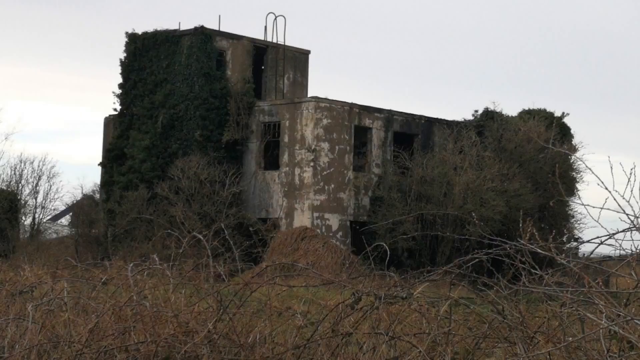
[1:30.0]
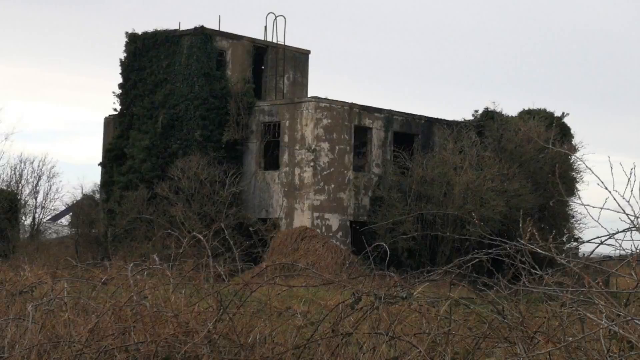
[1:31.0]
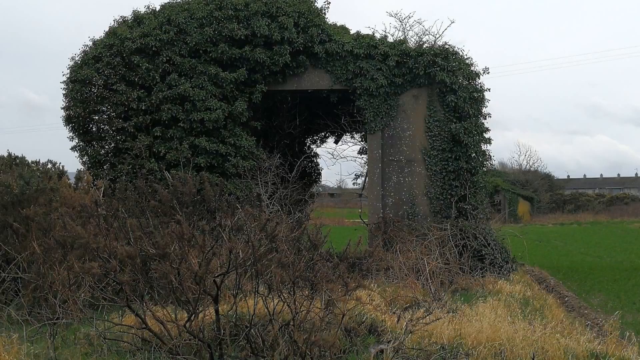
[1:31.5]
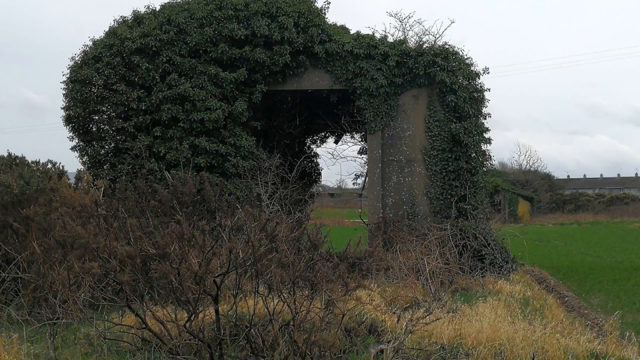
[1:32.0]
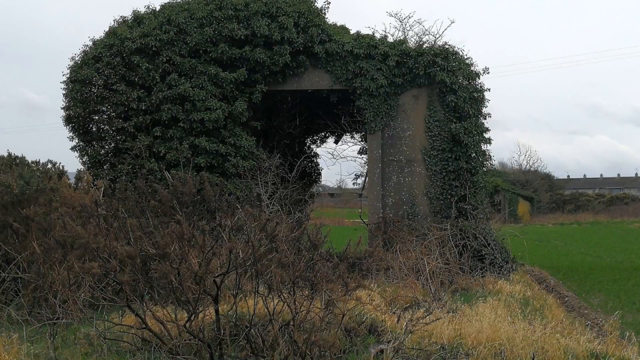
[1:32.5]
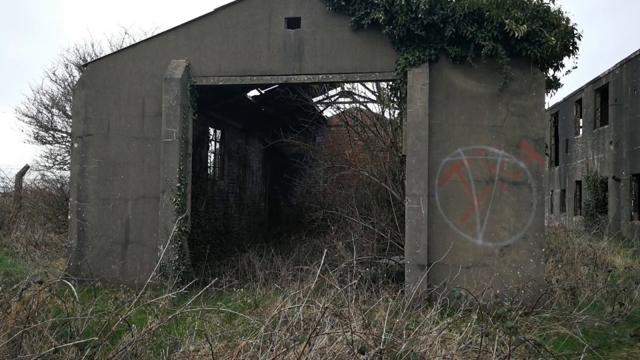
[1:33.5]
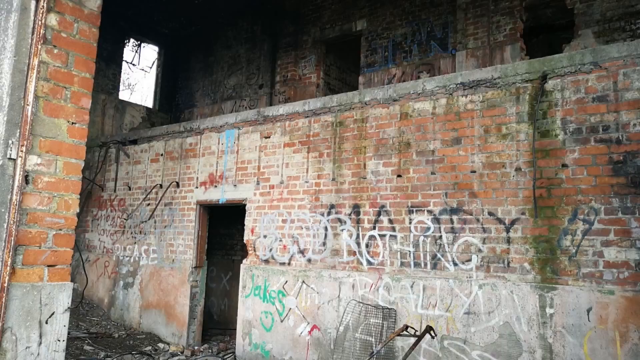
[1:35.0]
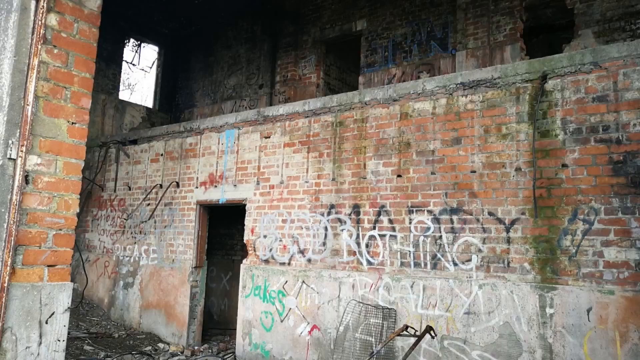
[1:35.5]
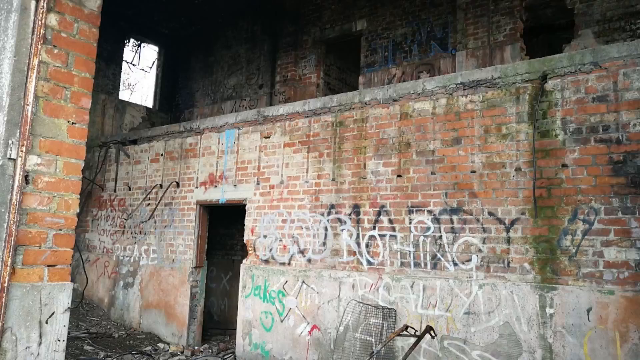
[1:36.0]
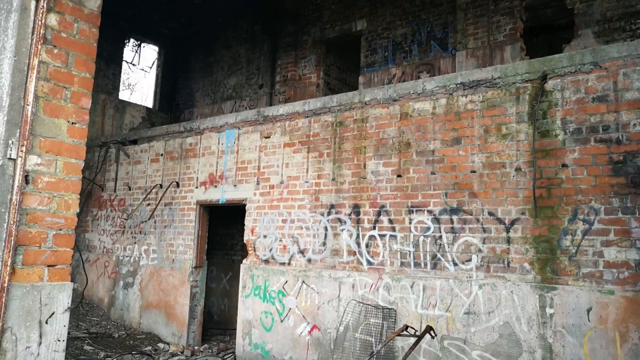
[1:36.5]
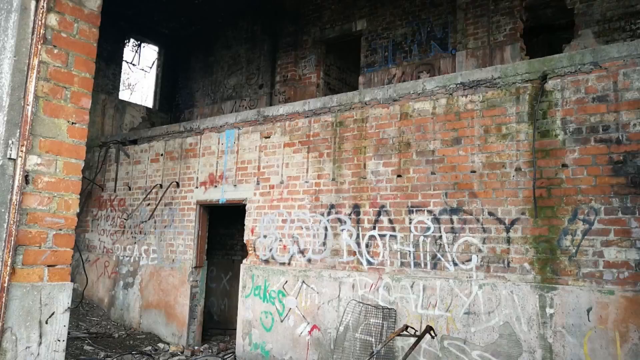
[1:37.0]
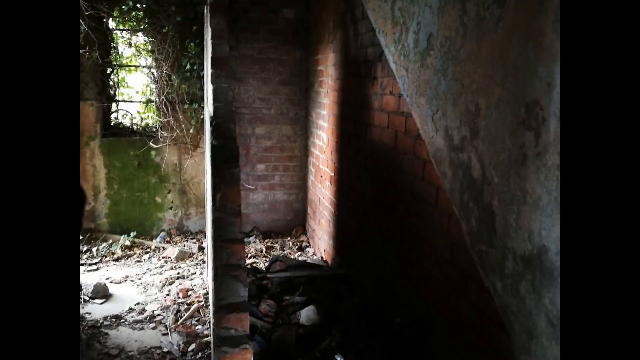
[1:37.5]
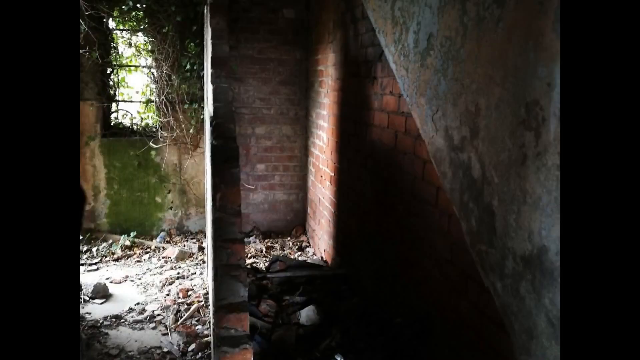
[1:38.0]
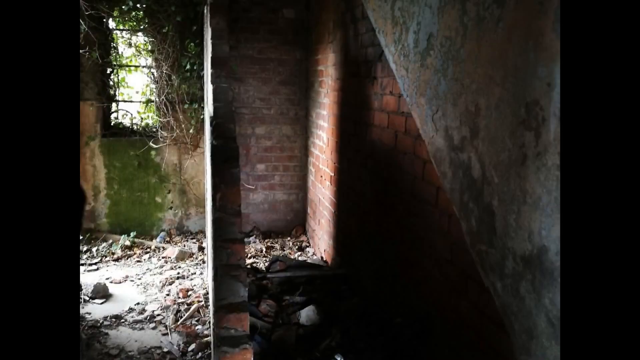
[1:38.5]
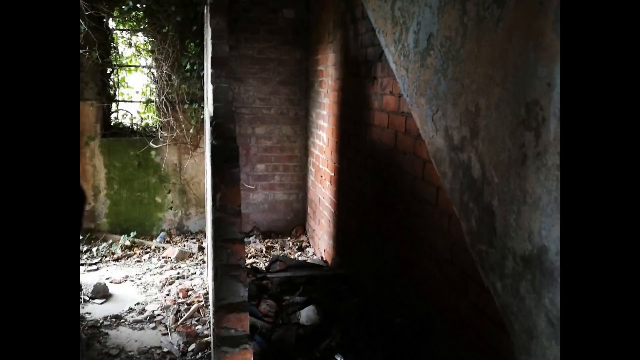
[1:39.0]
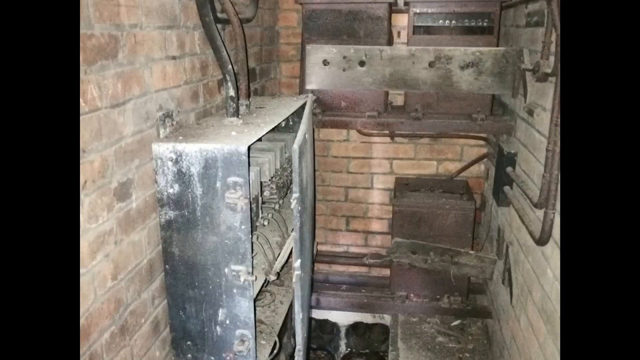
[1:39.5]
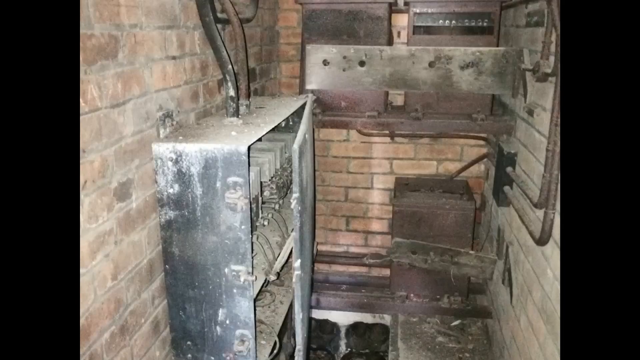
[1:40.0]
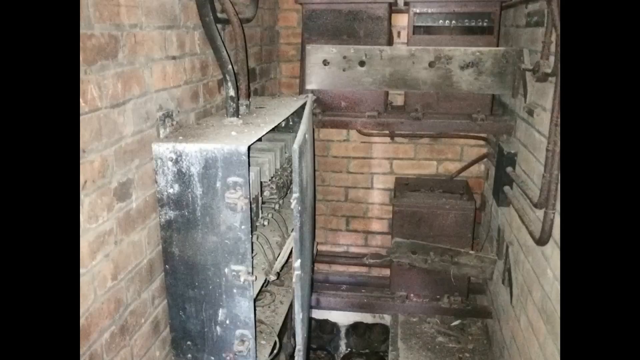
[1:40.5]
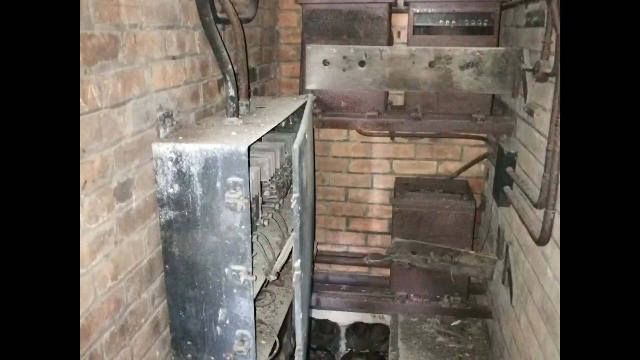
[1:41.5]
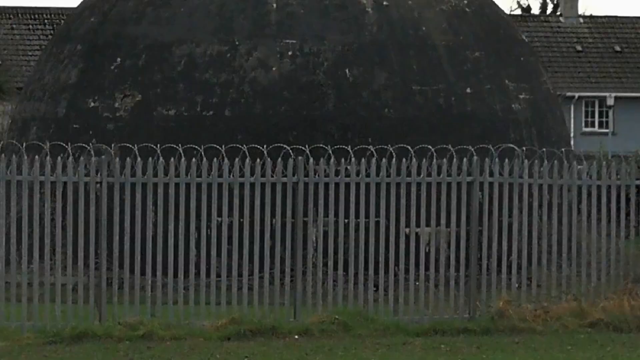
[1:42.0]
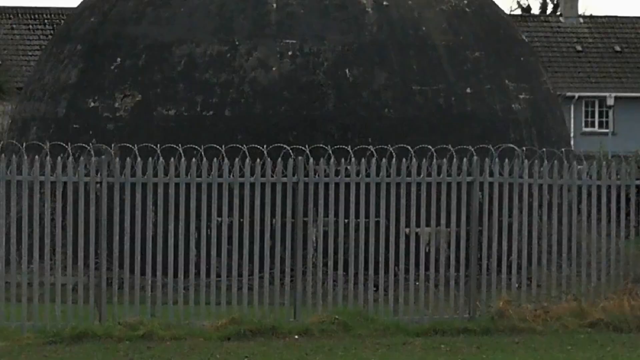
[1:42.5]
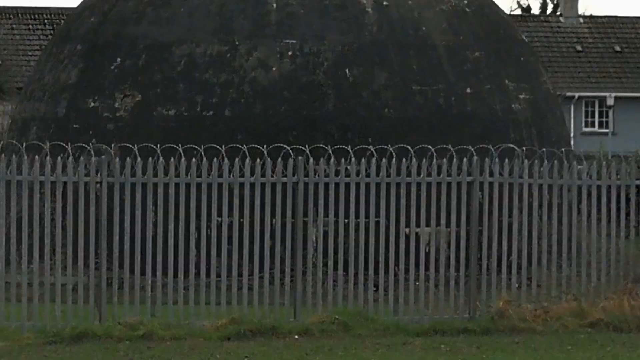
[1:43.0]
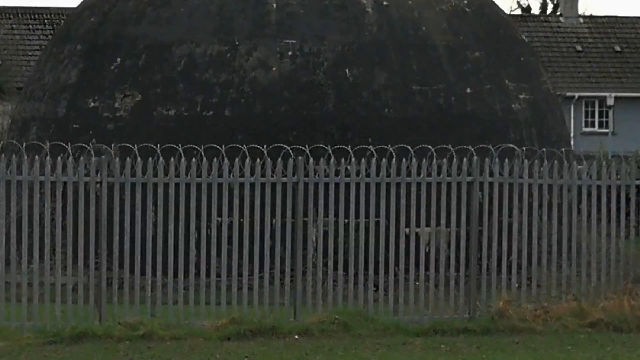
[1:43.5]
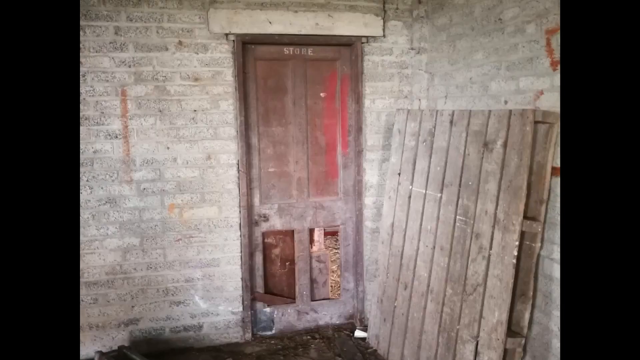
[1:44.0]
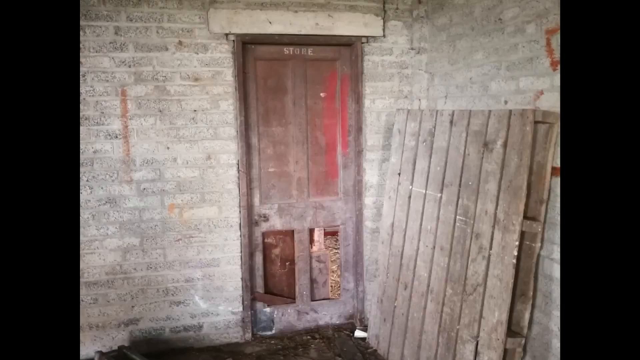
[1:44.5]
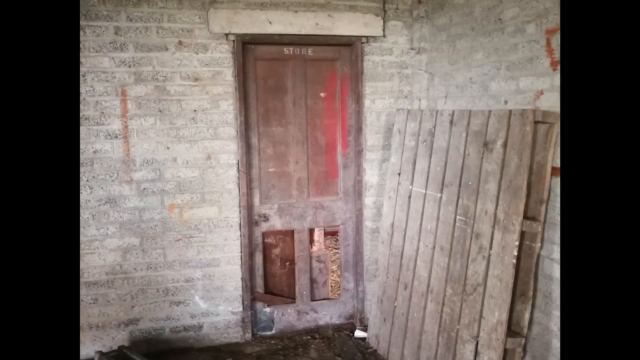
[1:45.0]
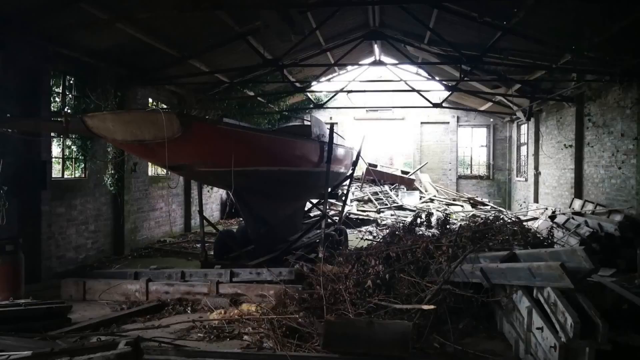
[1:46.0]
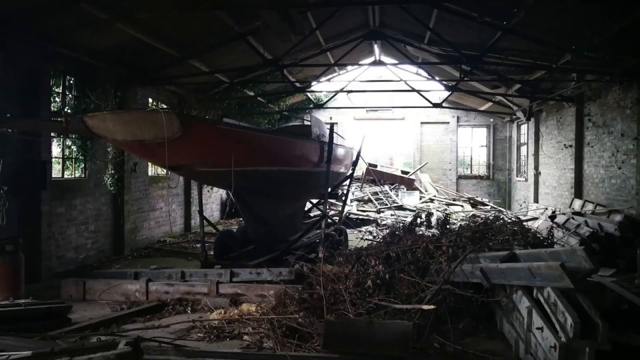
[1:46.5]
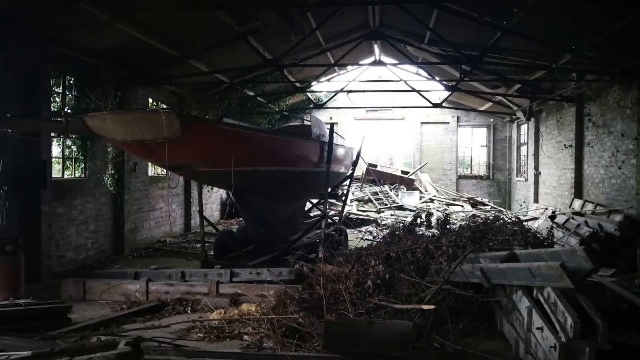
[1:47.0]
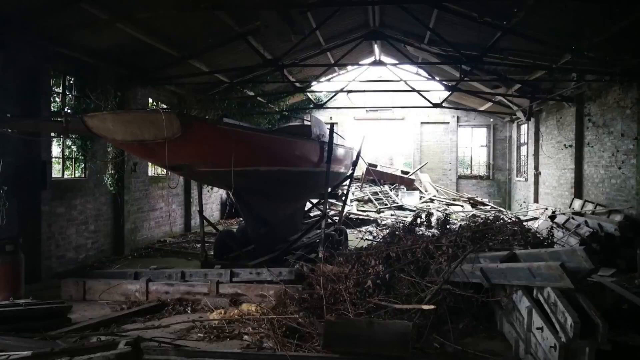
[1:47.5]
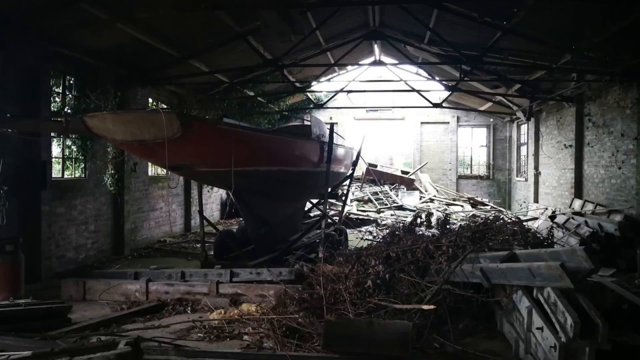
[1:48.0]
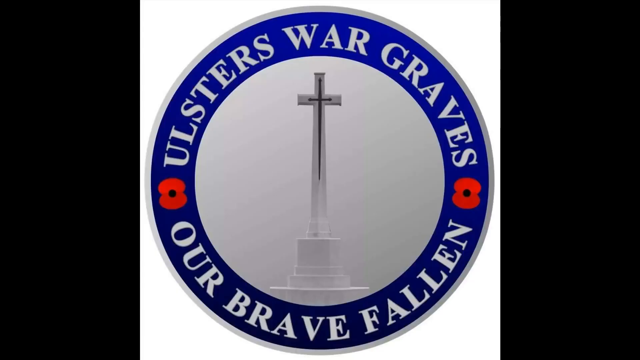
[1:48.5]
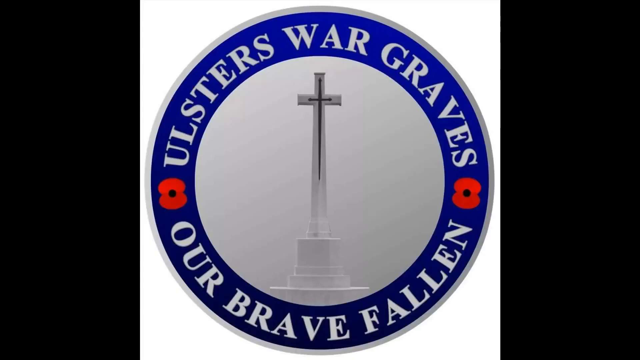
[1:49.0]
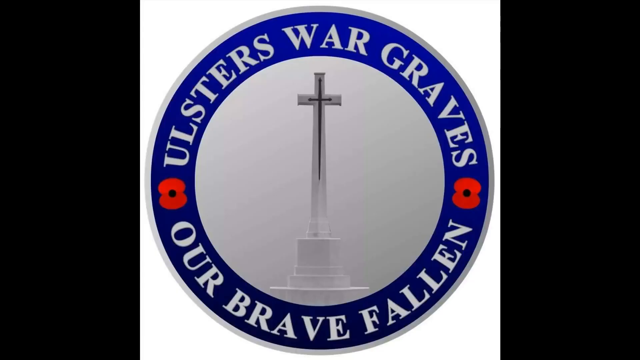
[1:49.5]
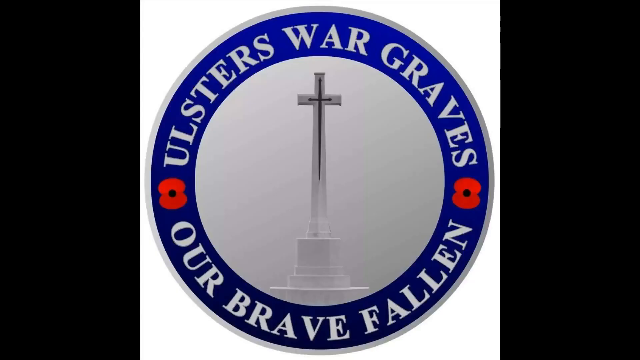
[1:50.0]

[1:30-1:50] An old abandoned brick structure is shown. Its outside has been overtaken by vegetation, thicket, and brush; inside, it looks like someone took most of the things out and left it. The bricks are deteriorating from the weather. It is in the countryside, with no other structures visible nearby. Inside it is grey cement and red brick, with graffiti written on the brick walls in some places. Inside there is moss and pallets lying around, and there is a section where what looks like a boat is on a rack, with wood all over the place. Part of the roof has apparently fallen in, and light is visible from above. Then a logo appears: a grey circle with blue inside and white text on the blue, and two red symbols, one on each side. The text reads "Ulsters War Graves our brave fallen."